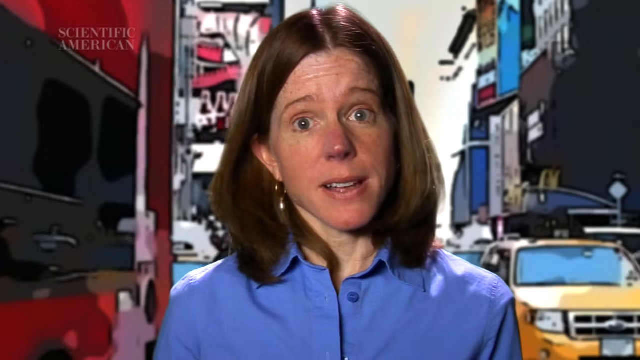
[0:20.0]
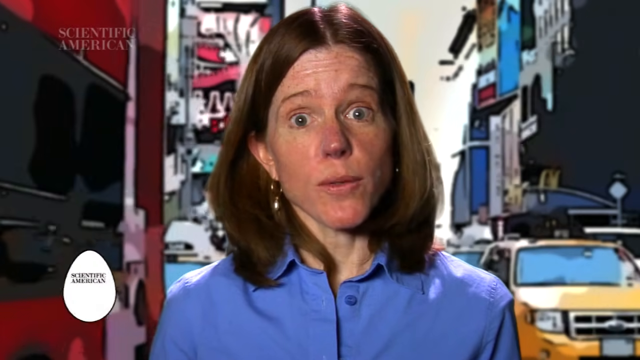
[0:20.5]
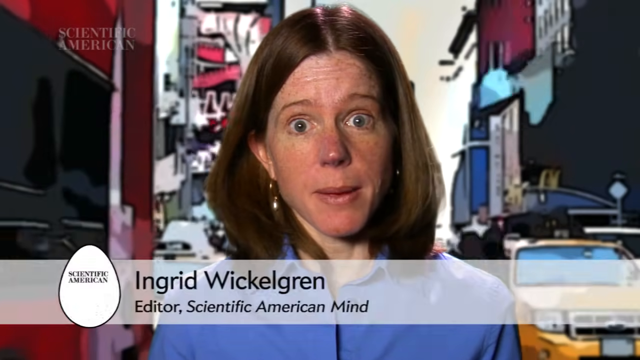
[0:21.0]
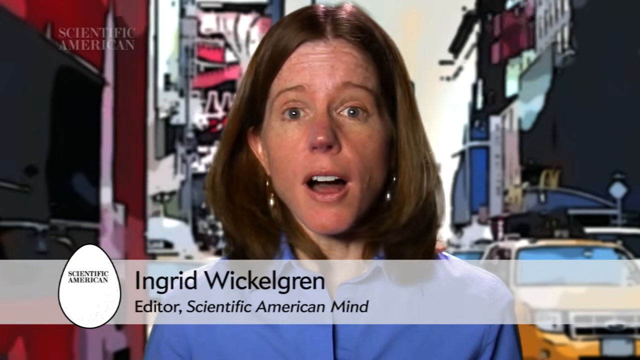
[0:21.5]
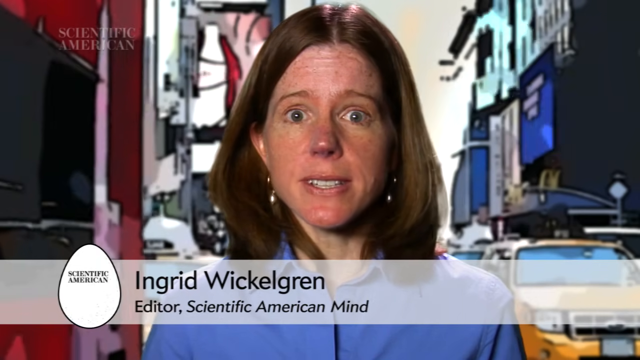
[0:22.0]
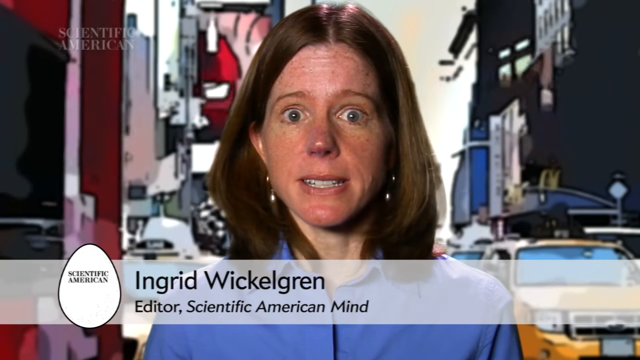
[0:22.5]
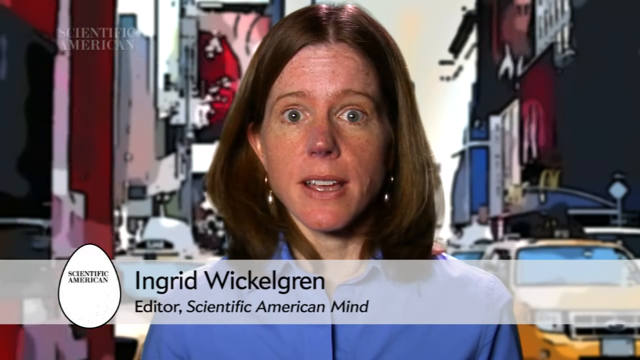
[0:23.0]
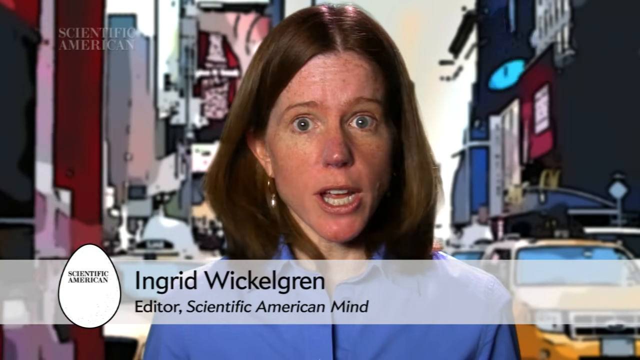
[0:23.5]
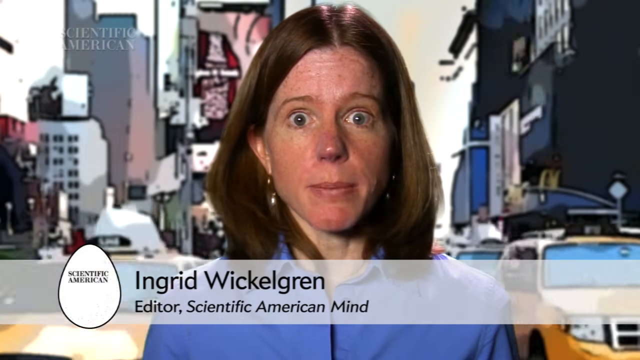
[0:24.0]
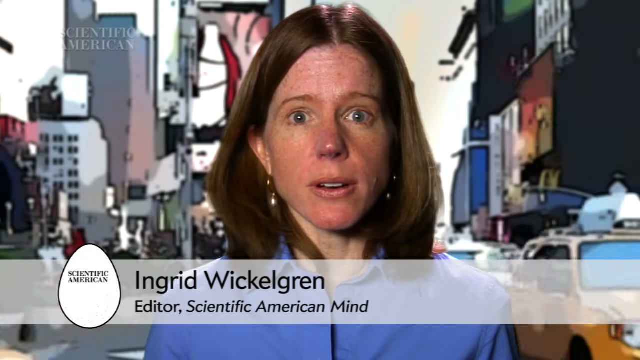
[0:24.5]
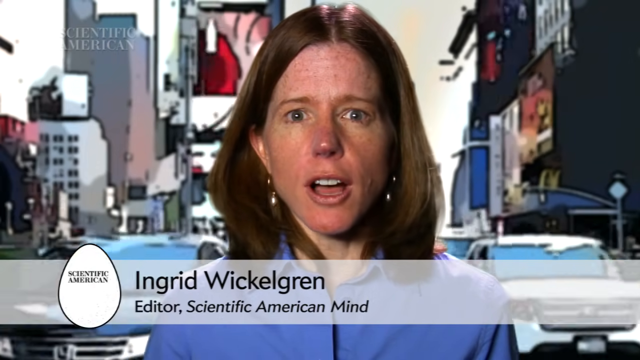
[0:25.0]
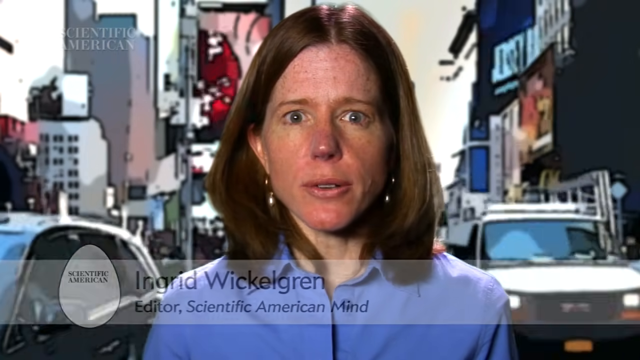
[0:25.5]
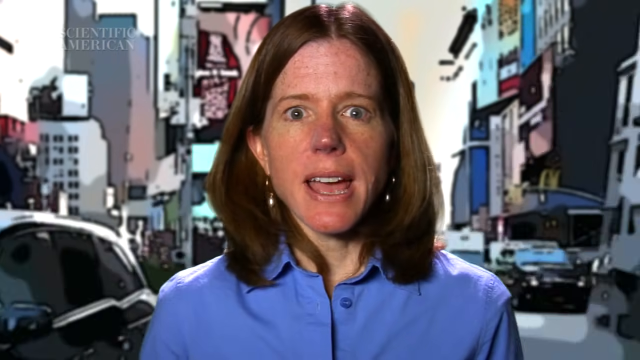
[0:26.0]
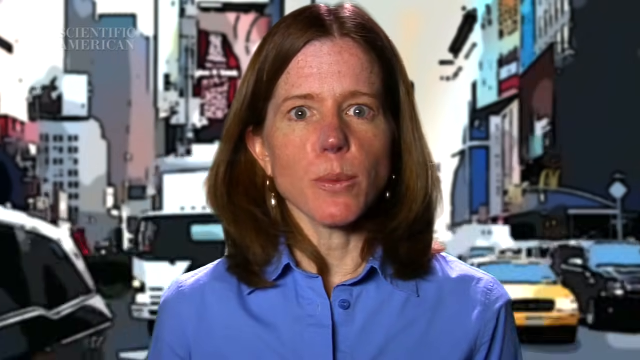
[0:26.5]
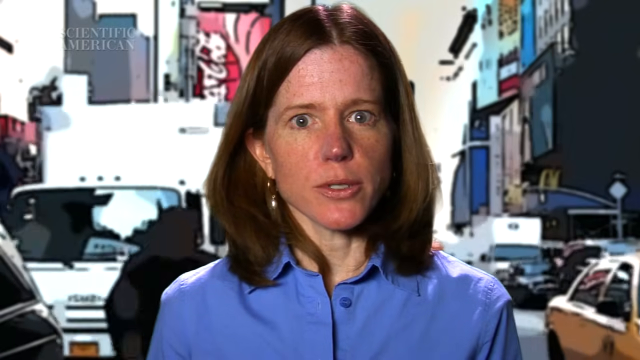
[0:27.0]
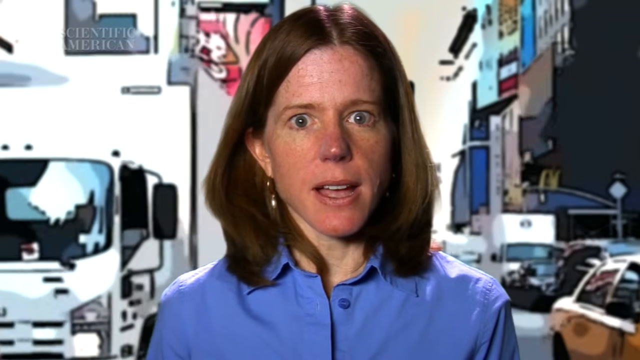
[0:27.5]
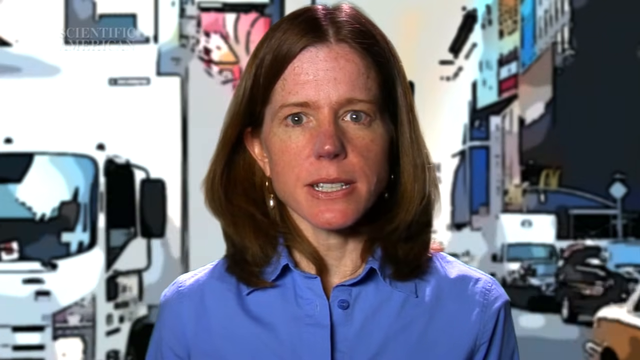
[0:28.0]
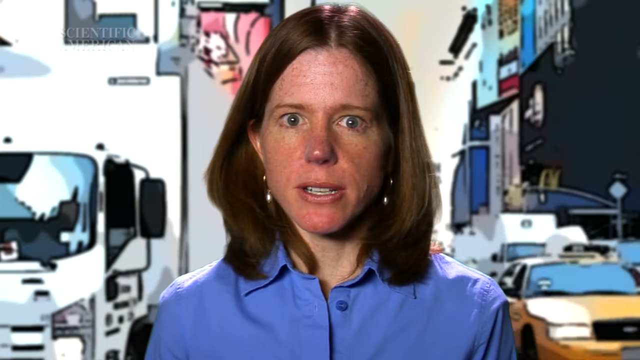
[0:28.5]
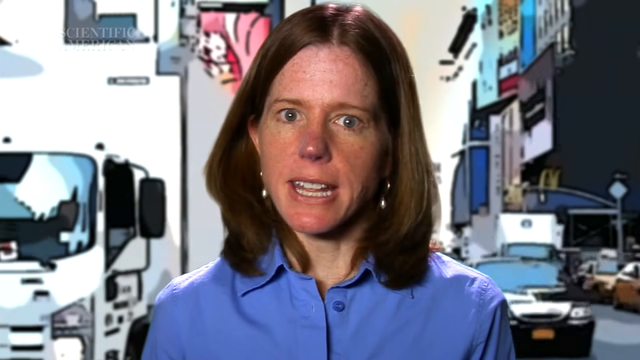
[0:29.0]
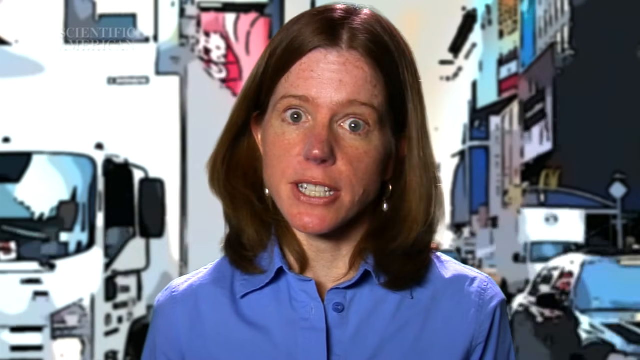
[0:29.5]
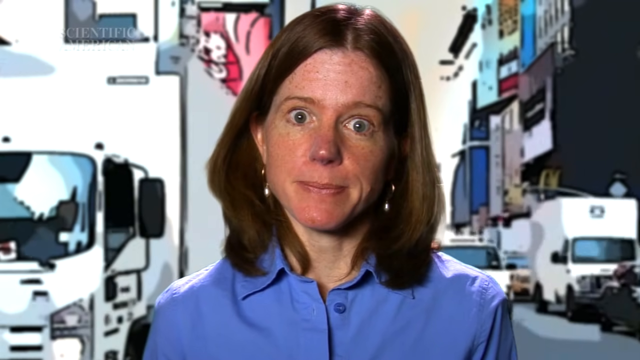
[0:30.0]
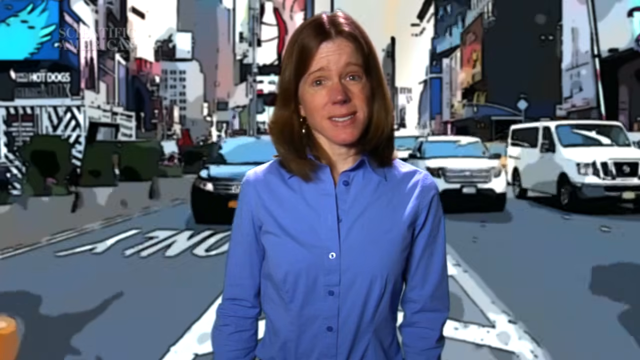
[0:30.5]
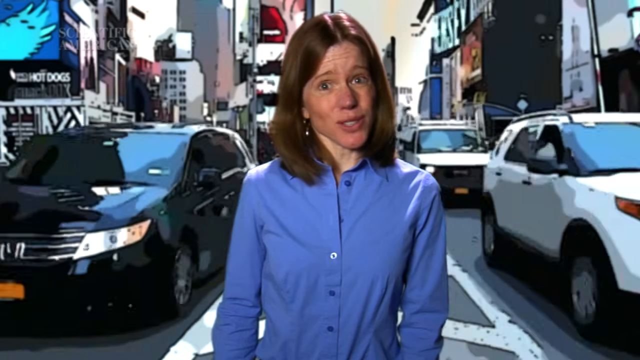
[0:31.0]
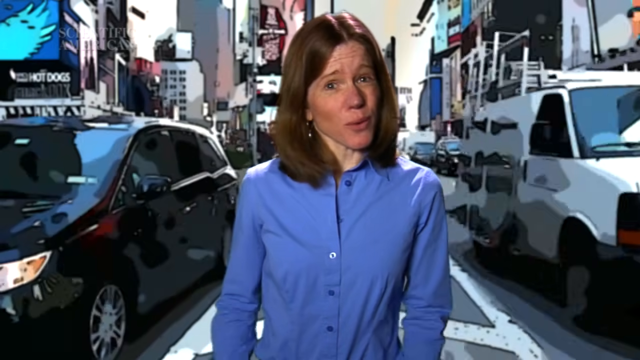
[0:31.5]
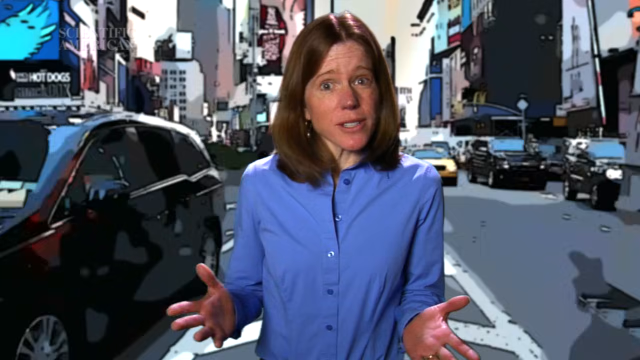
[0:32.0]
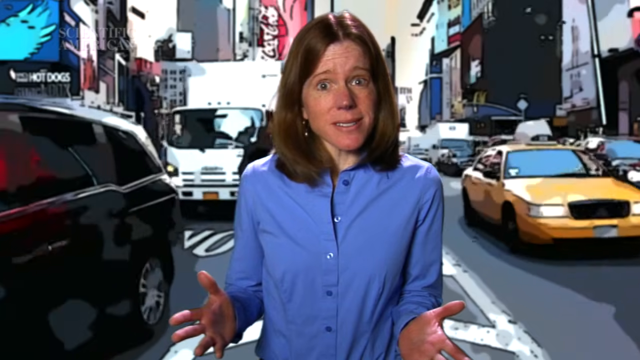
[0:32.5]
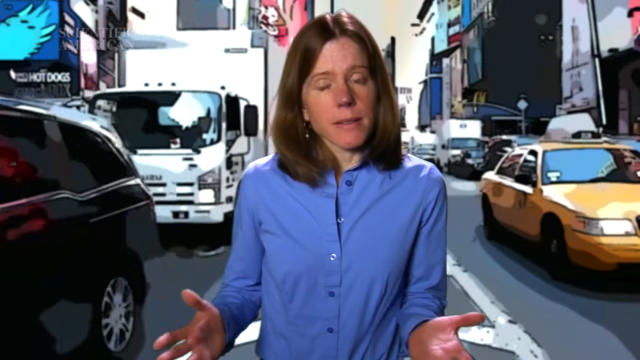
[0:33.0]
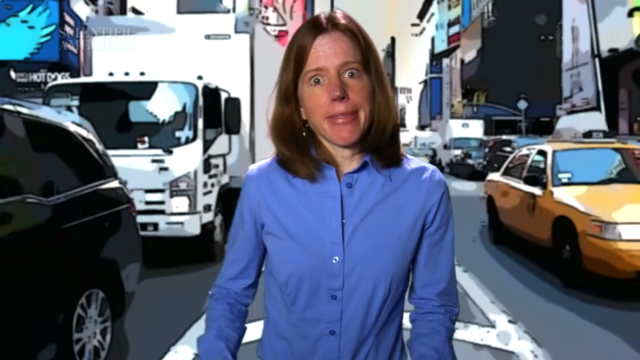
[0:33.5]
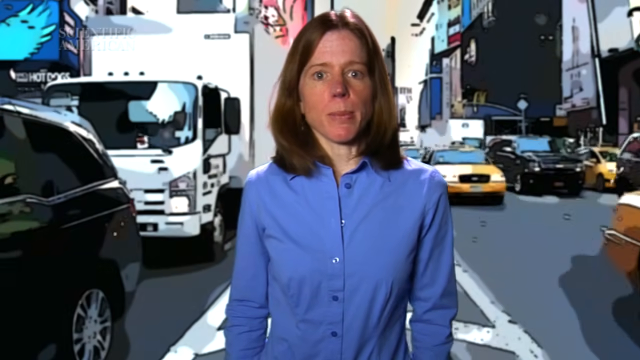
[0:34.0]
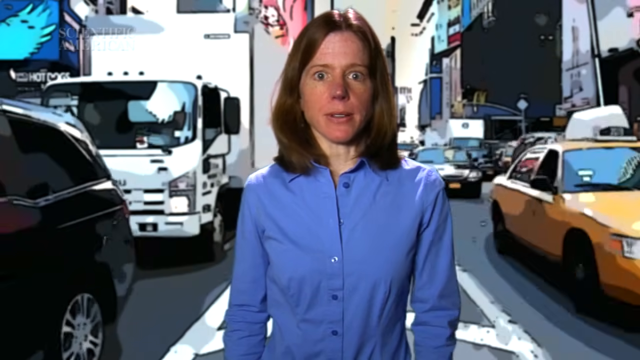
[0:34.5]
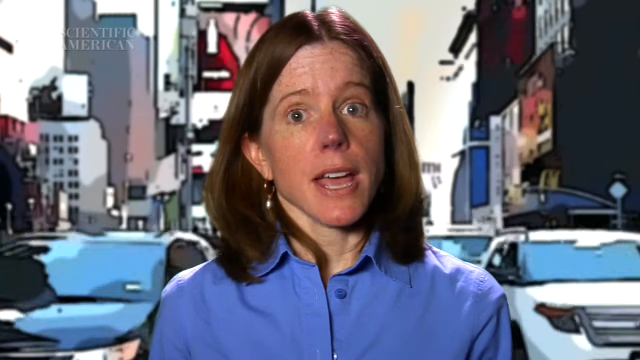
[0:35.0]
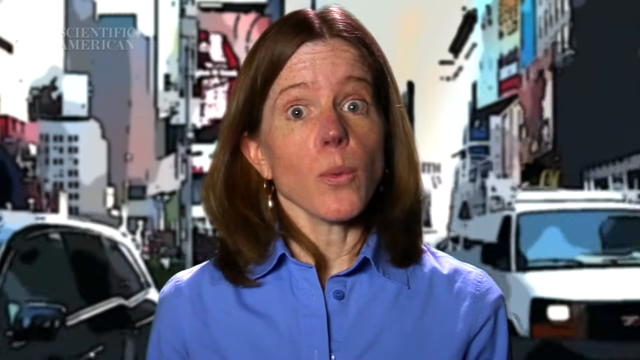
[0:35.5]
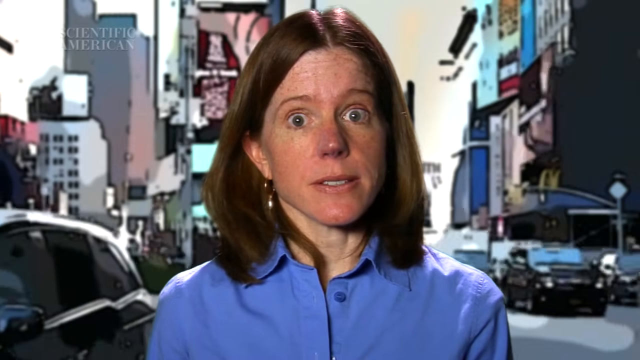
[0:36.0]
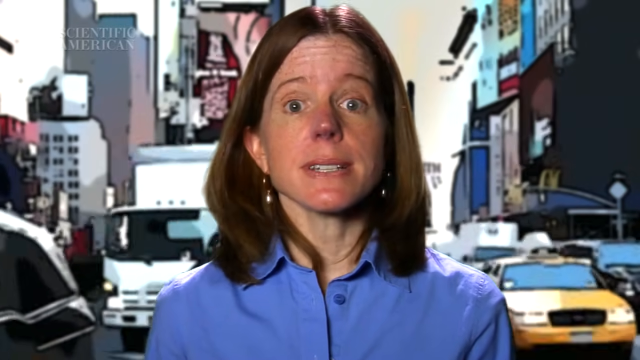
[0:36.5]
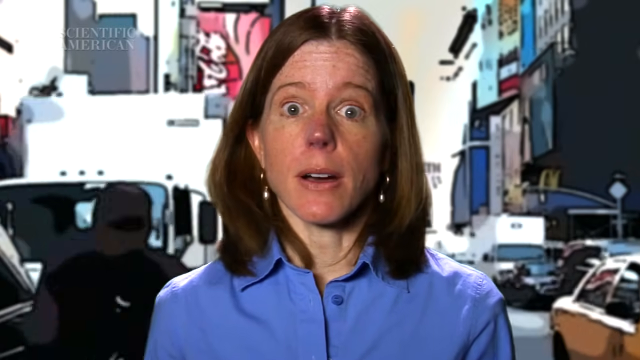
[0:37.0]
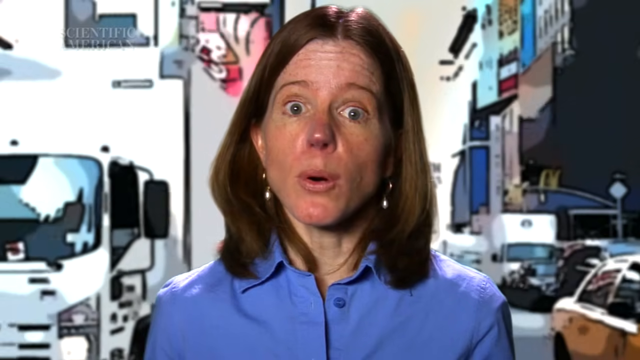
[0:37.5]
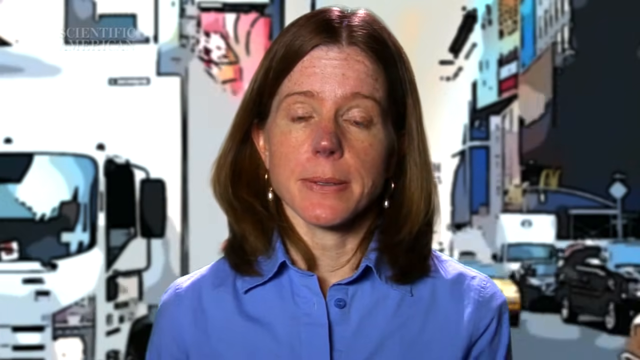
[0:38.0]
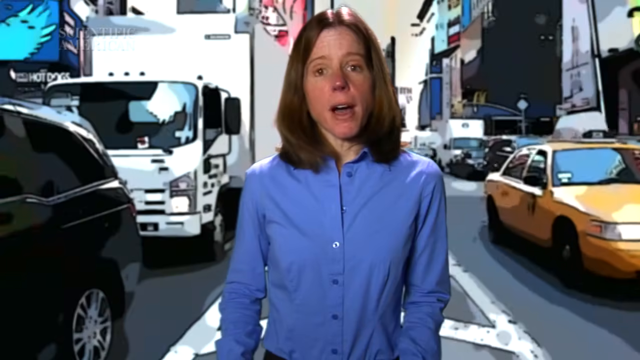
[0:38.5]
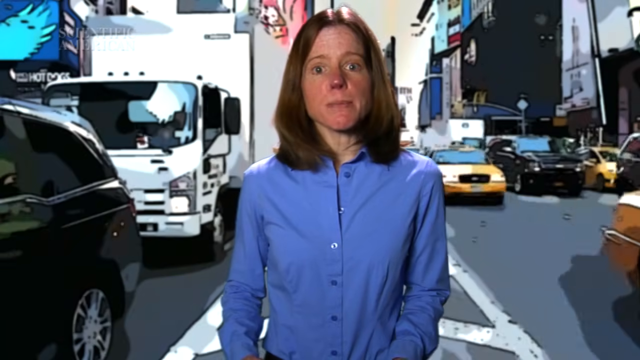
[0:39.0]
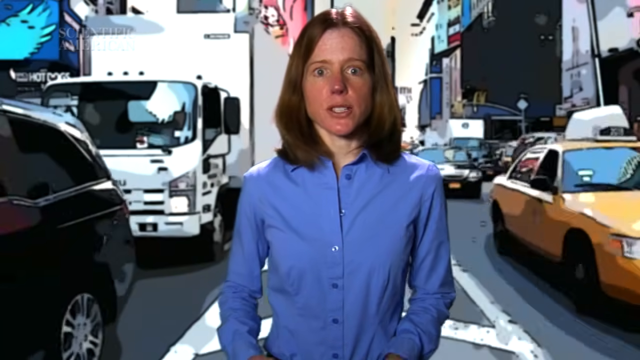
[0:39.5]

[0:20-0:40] In Times Square, New York, the words "Scientific American" are in the top left corner. The woman appears to be standing in the middle of the street, with tall buildings around her and cars moving around her. At the bottom her name appears: "Ingrid Wickelgren, editor, Scientific American Mind." She has brown hair and wears a blue button-front blouse. She speaks and sort of nods her head in a matter-of-fact way as traffic zooms past behind her: bicycles, taxi cabs and trucks. She is in the median, with traffic moving behind her on both sides. She wears earrings; her hair is straight, shoulder-length and brown, and her eyes are grey. She does not appear to be wearing makeup.